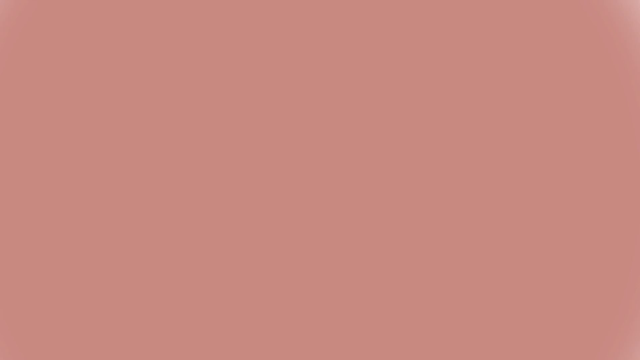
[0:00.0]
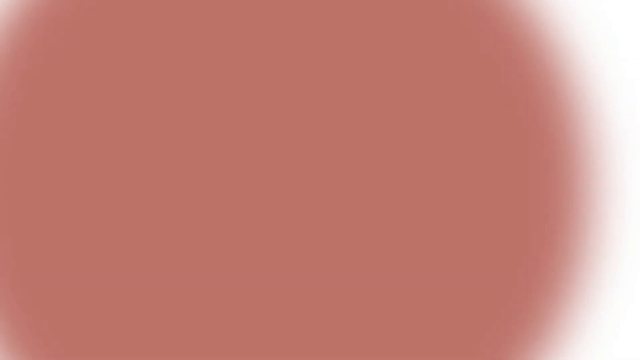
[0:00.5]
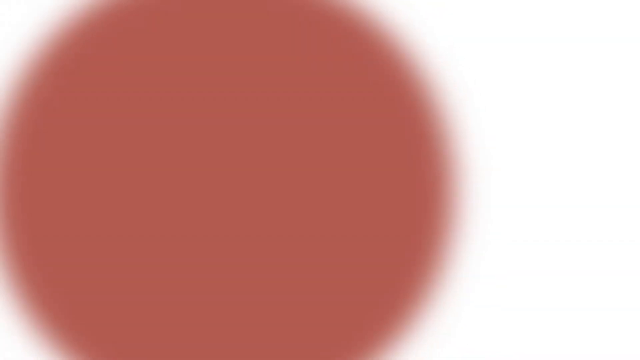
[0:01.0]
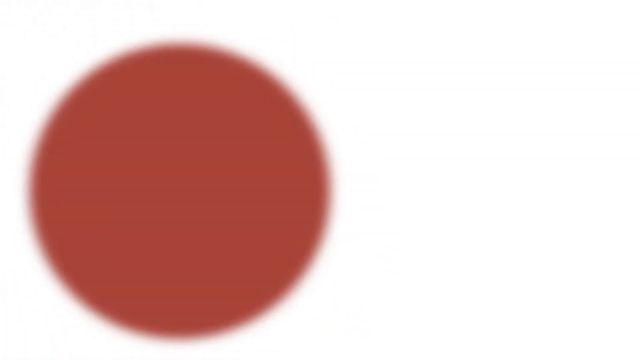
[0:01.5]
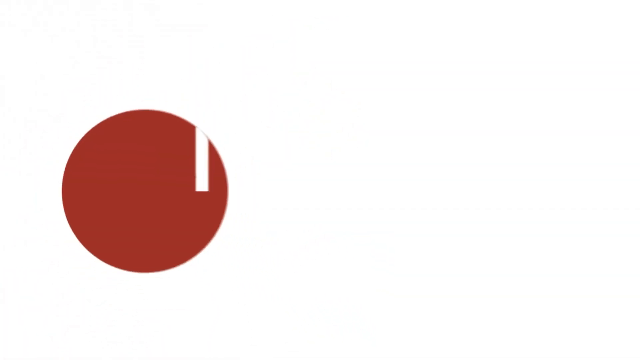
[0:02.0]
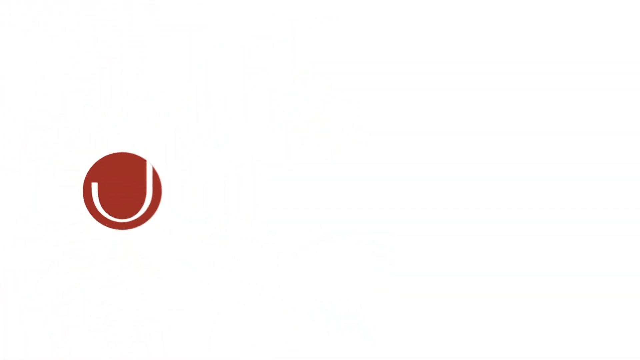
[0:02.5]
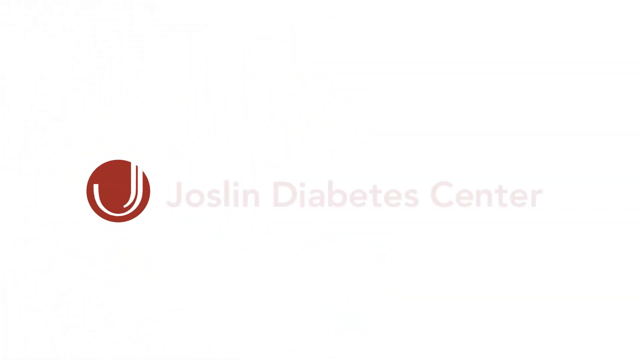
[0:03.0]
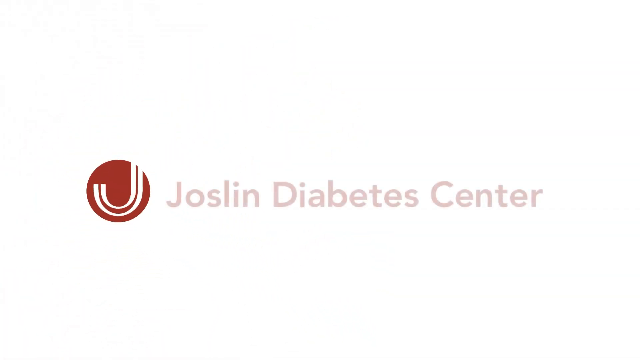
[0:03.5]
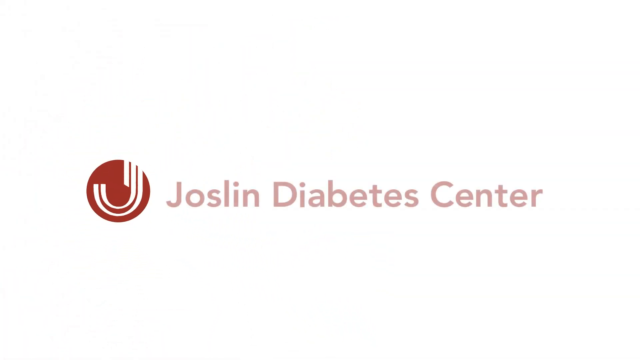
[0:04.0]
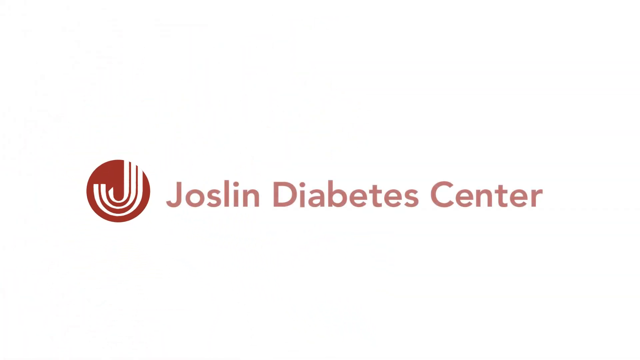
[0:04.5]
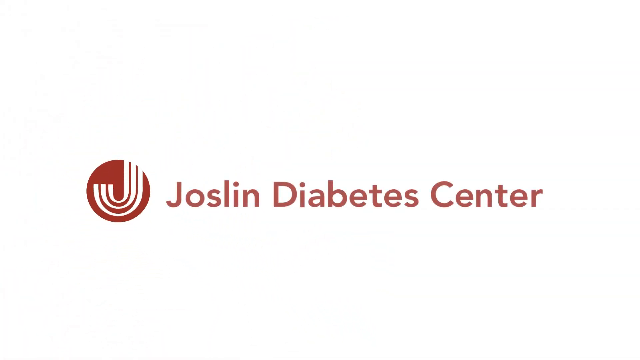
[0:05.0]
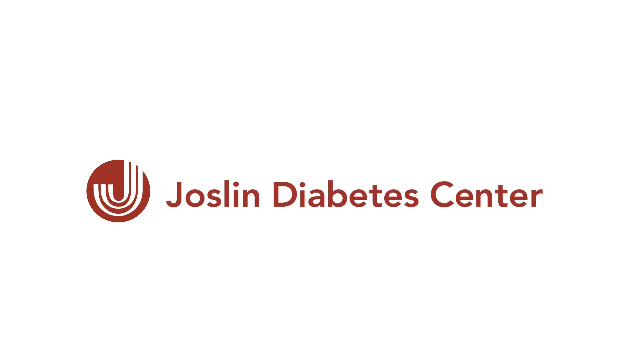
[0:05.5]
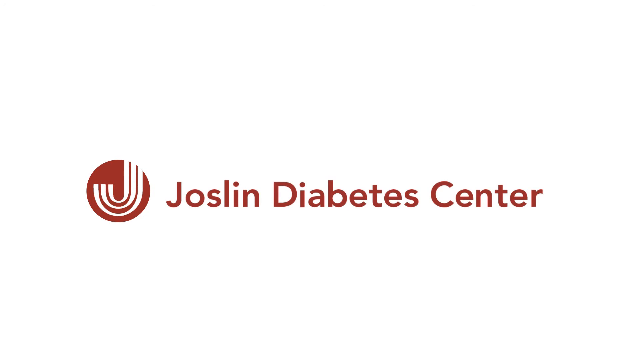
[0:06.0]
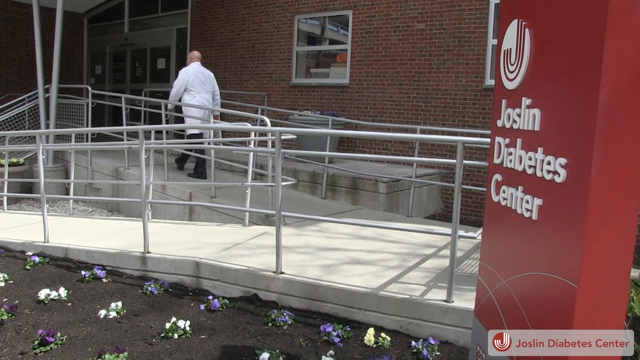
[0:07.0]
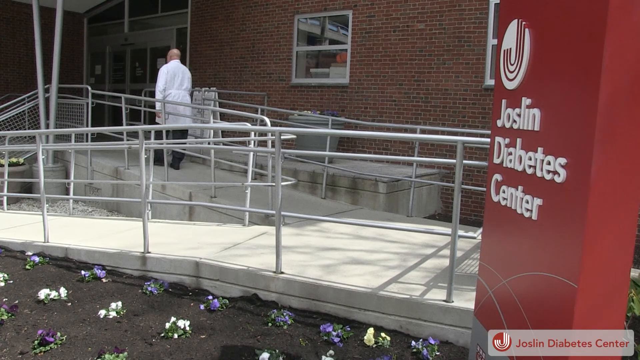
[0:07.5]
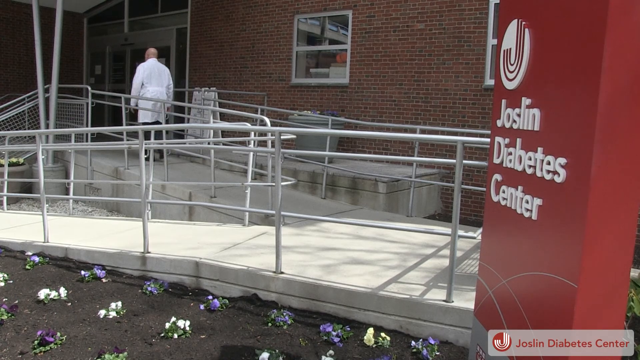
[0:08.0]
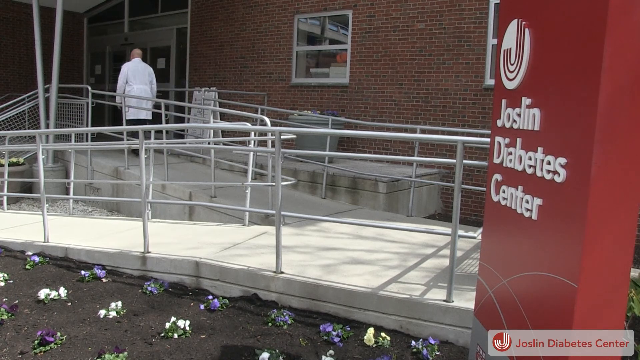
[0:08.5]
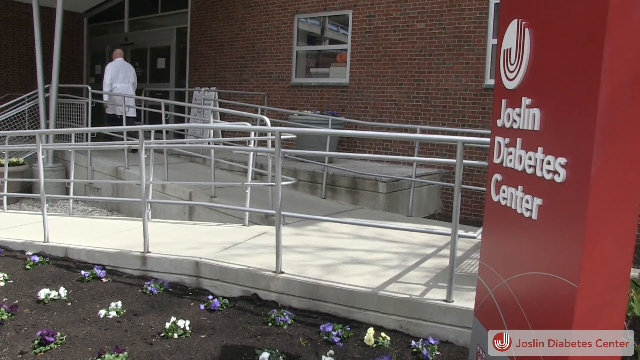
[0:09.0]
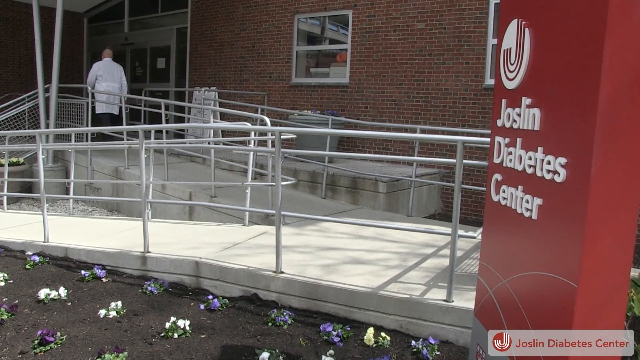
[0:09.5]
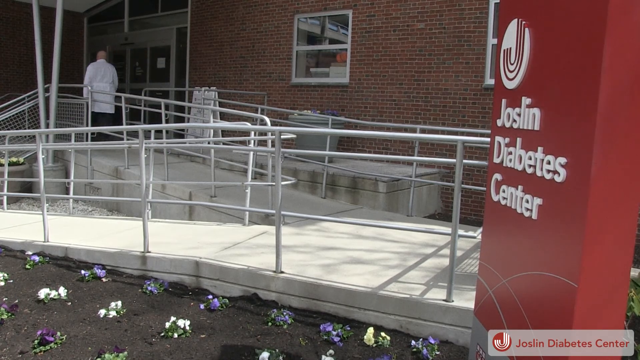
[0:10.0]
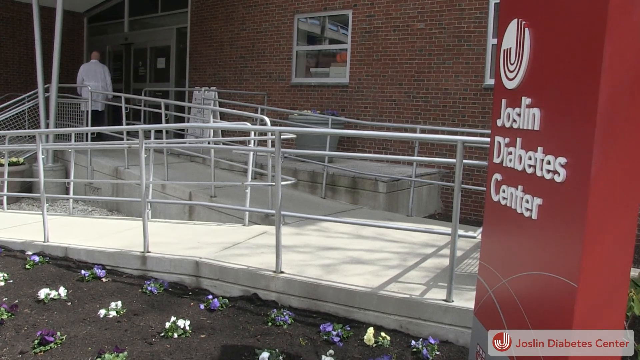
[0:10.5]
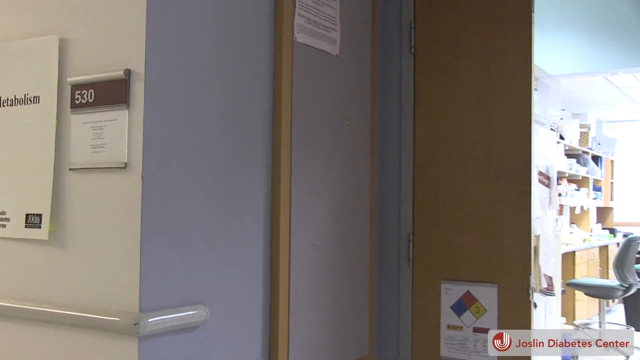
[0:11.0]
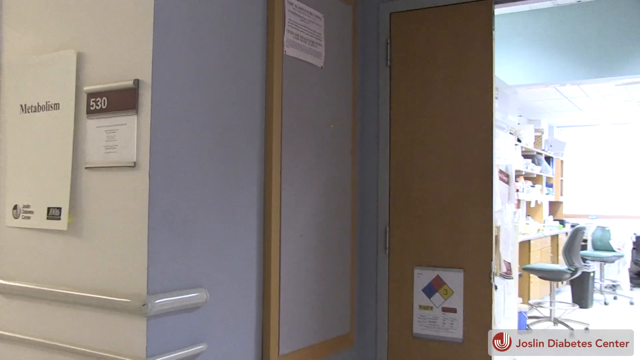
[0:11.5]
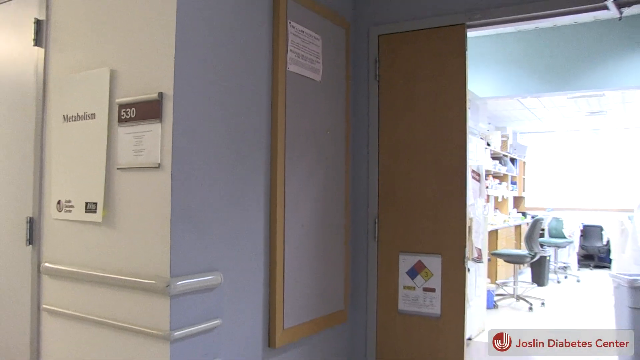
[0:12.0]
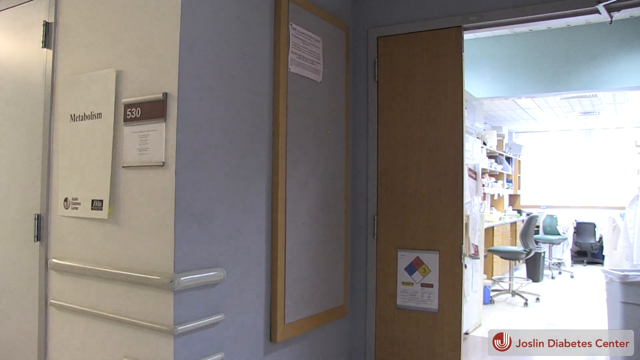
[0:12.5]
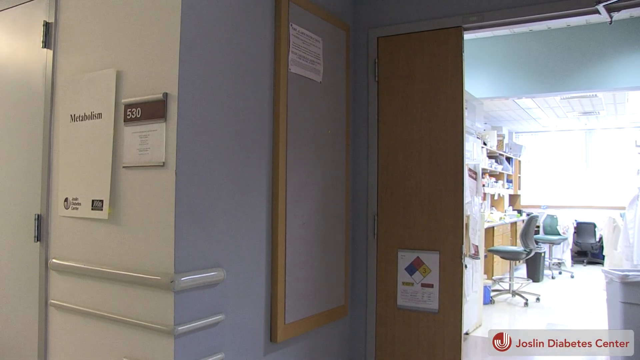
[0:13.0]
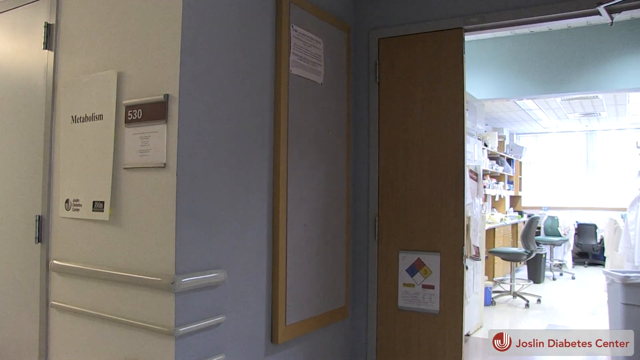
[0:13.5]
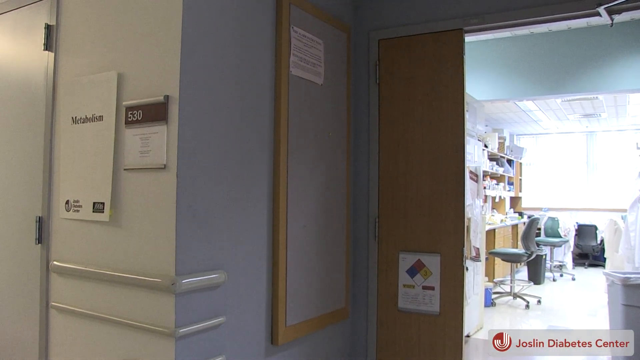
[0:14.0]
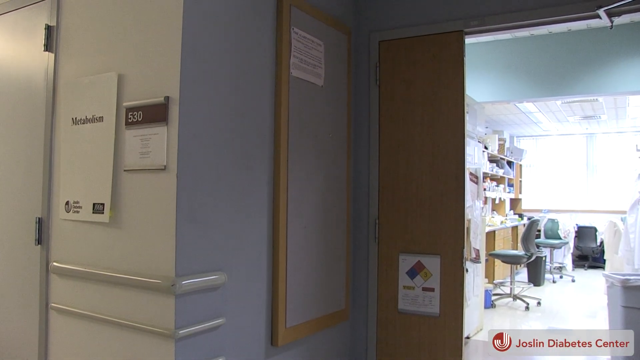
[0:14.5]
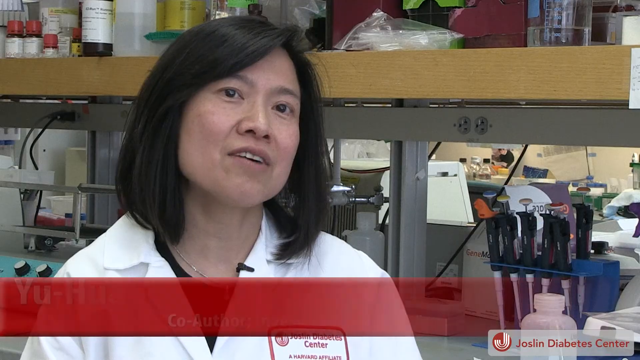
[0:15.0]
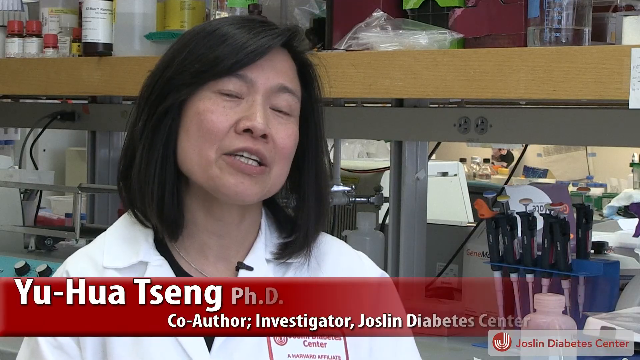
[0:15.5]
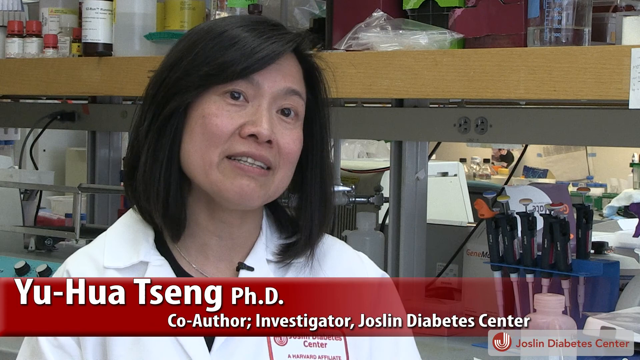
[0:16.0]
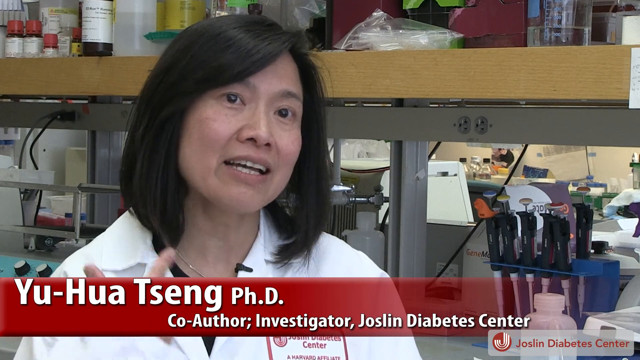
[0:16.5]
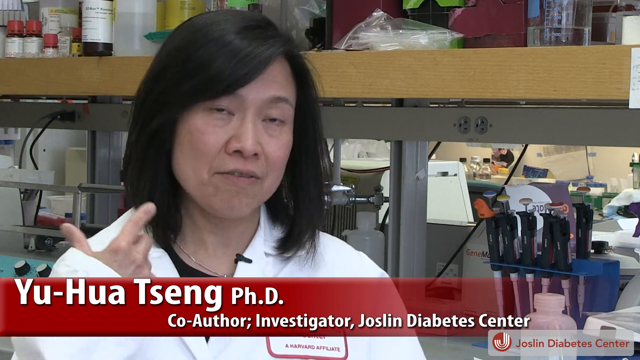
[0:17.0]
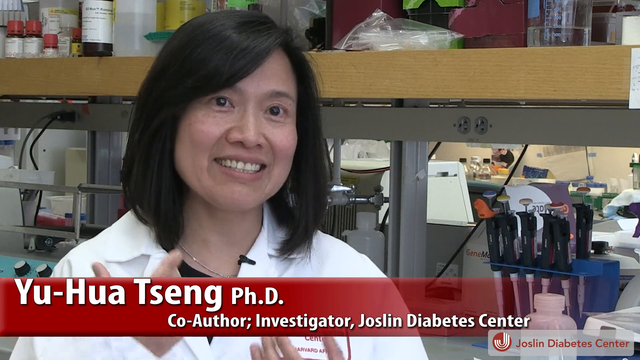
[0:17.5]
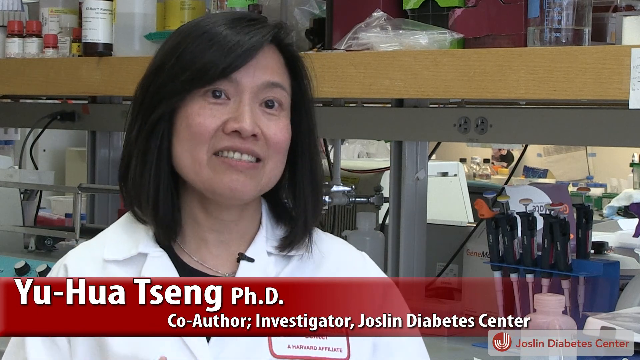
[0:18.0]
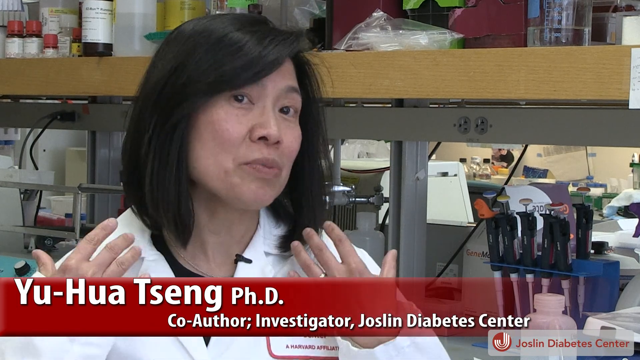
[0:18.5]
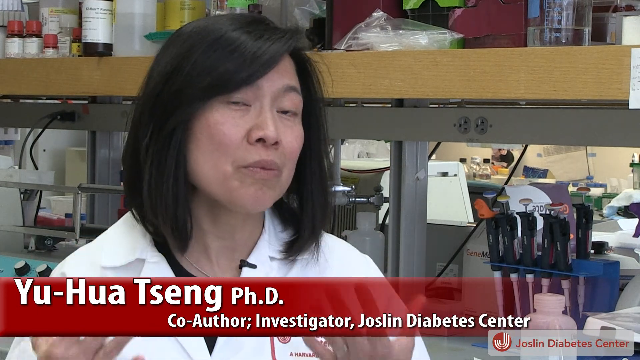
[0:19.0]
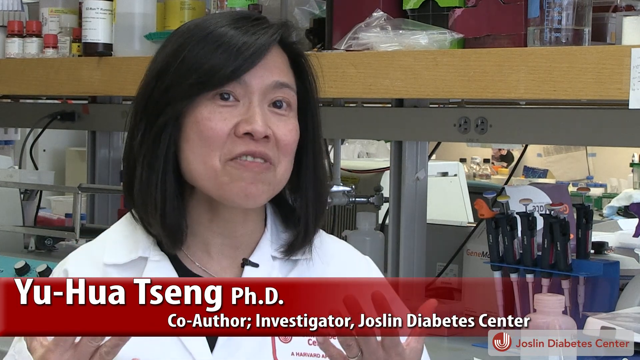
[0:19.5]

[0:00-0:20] The video opens zoomed in on a red circle, then slowly zooms out to reveal that the red circle is a logo. Within the red circle, an animation makes the letter J appear in a white font, and the company name accompanying the logo is Joslin Diabetes Centre. The scene switches to a red sign erected from the ground bearing the same logo; the sign says "Joslin Diabetes Centre" in white text. The view is of the entrance of the centre's building. A disability-friendly concrete ramp runs up towards the front doors, which are sliding doors, and there are also some steps leading to the front door. The main building has a red-brown brick exterior, with some glass windows visible along the front wall. A man wearing a white lab coat walks up the ramp towards the front entrance. The scene then moves inside the building, outside Room 530, as shown by a sign on the wall outside the room's door, along with a white sign bearing the word "Metabolism". Next comes an interview with Yu-Hua Tseng, Ph.D., the co-author and investigator at the Joslin Diabetes Center. She looks enthusiastic, smiles, and gestures with both hands as she speaks.